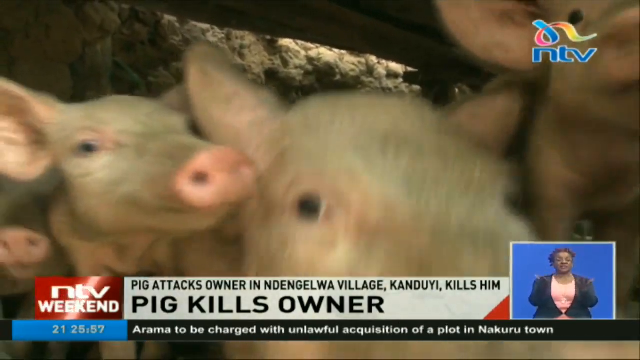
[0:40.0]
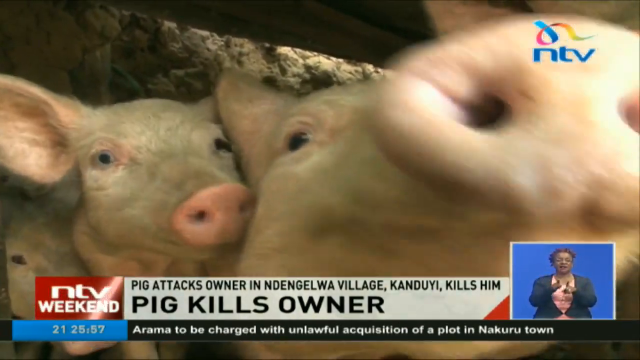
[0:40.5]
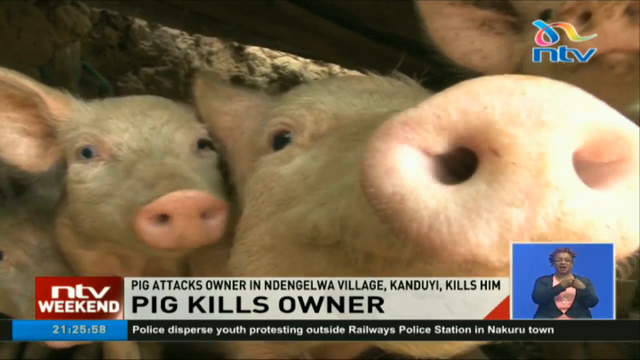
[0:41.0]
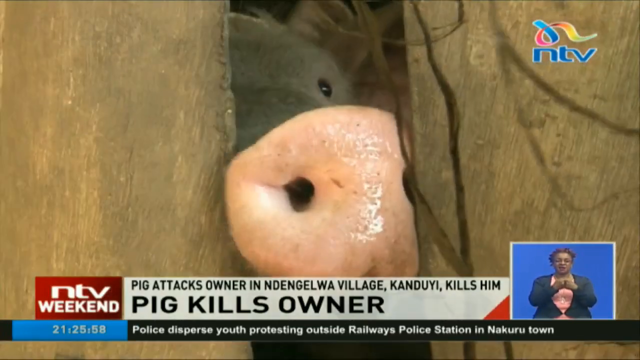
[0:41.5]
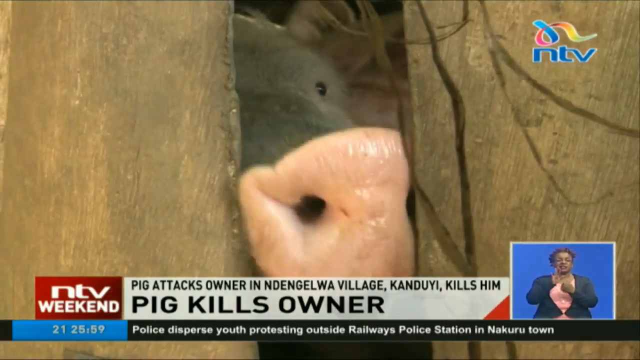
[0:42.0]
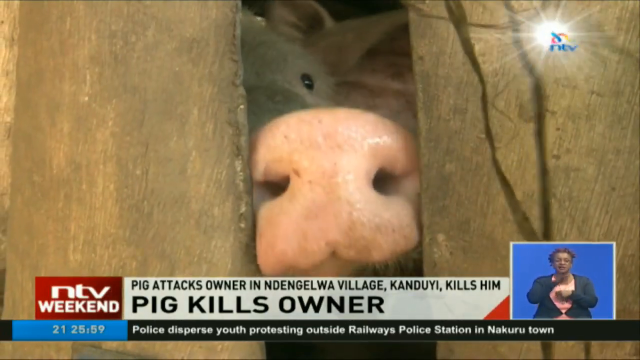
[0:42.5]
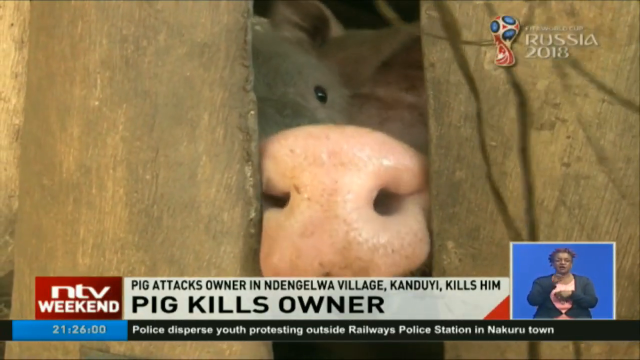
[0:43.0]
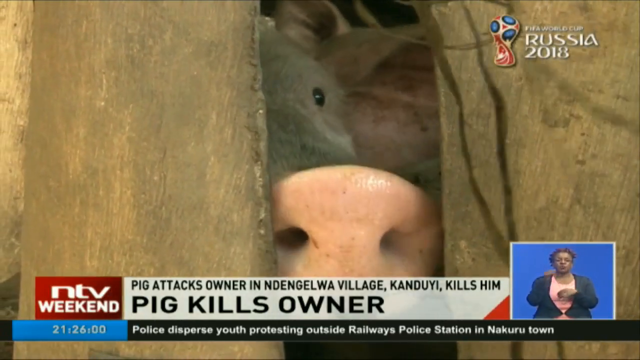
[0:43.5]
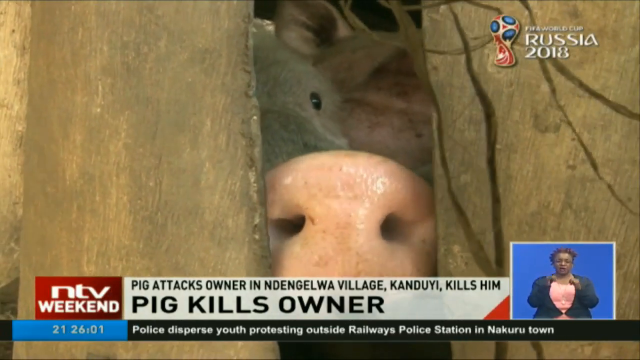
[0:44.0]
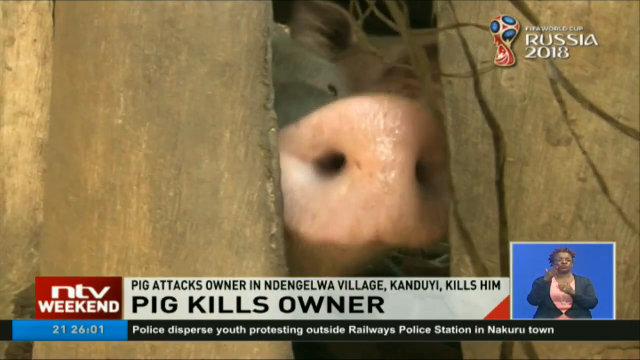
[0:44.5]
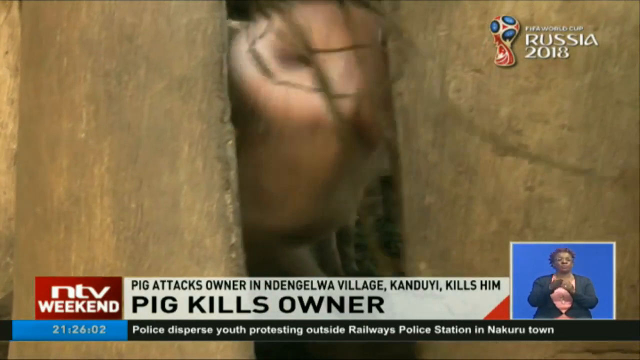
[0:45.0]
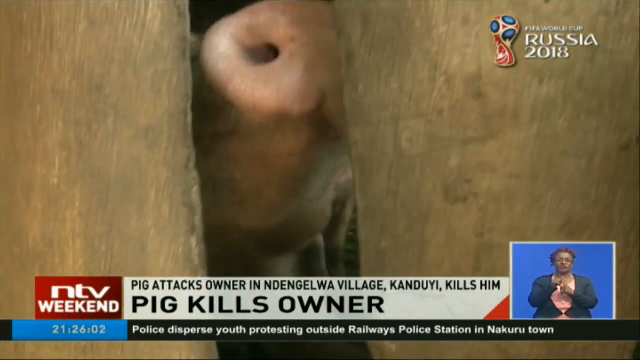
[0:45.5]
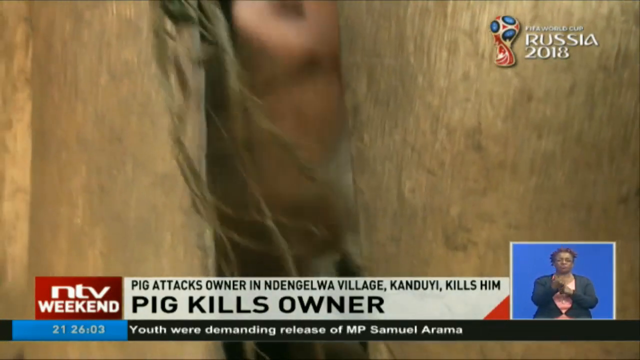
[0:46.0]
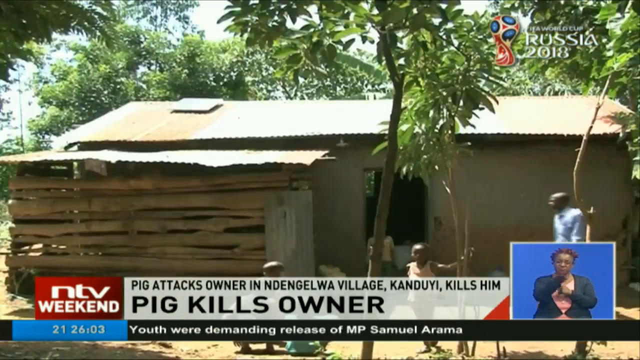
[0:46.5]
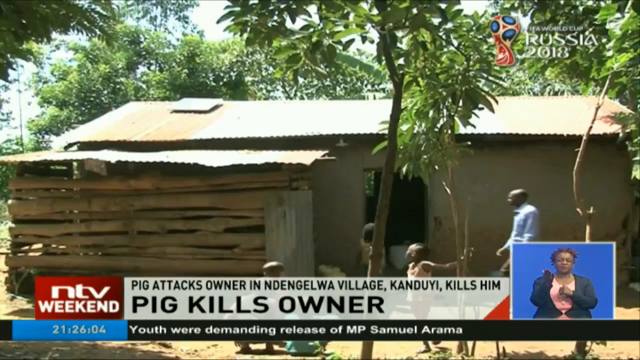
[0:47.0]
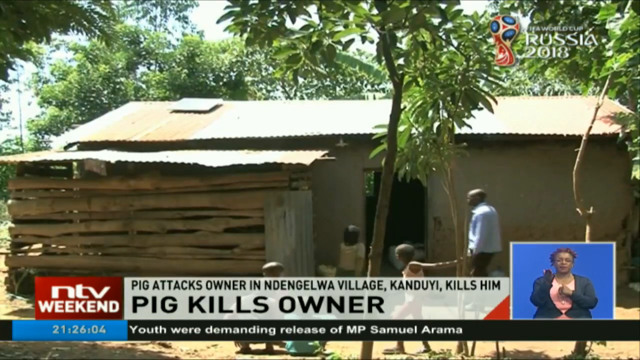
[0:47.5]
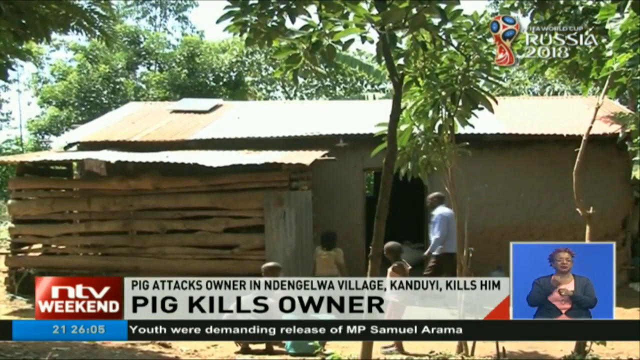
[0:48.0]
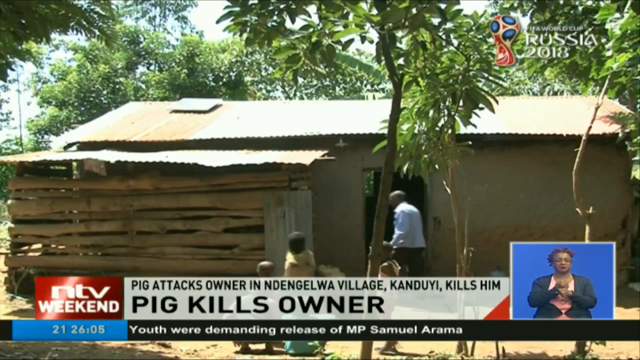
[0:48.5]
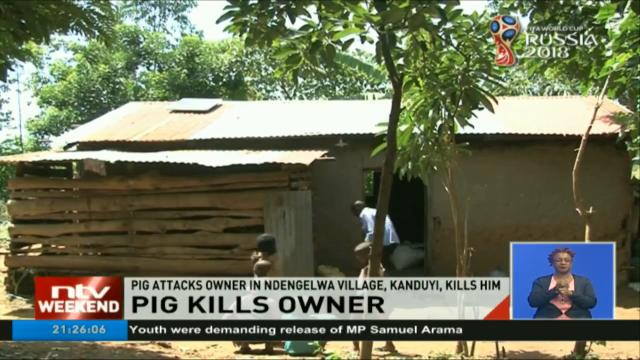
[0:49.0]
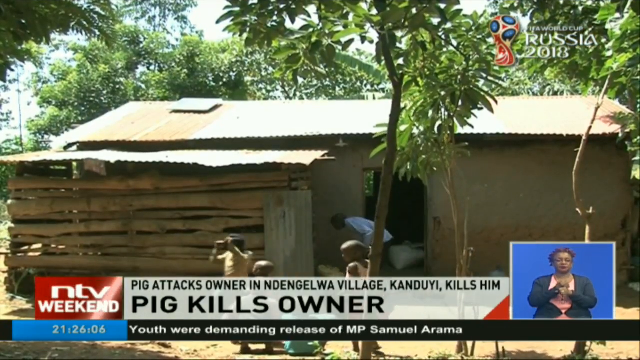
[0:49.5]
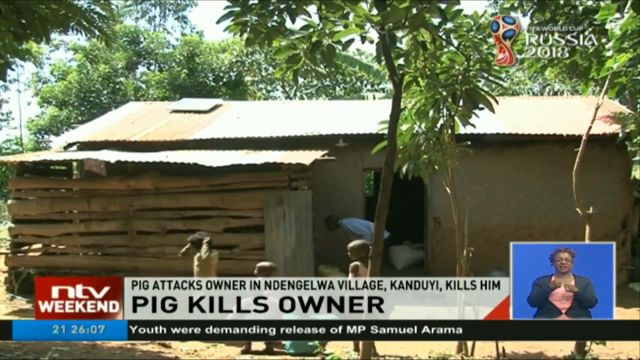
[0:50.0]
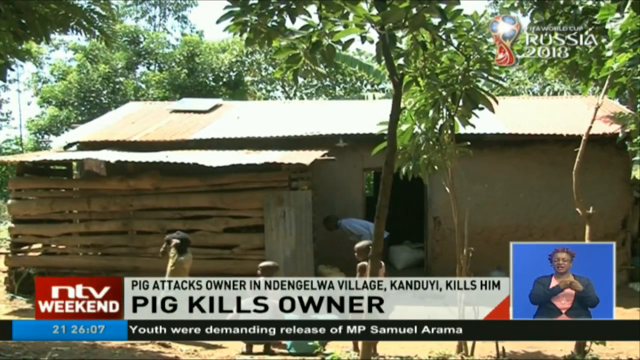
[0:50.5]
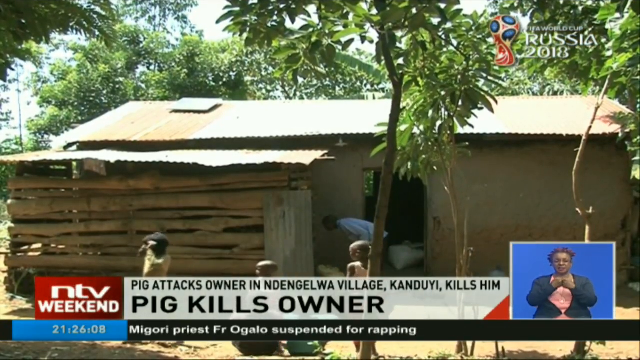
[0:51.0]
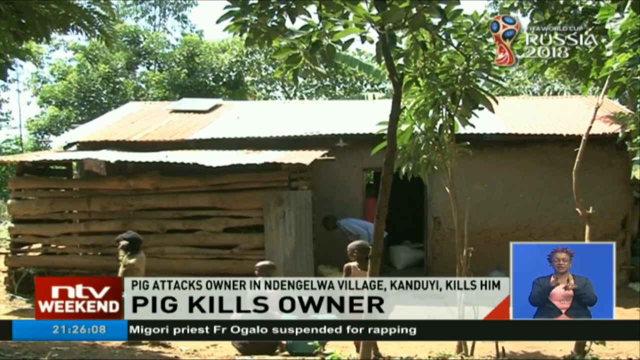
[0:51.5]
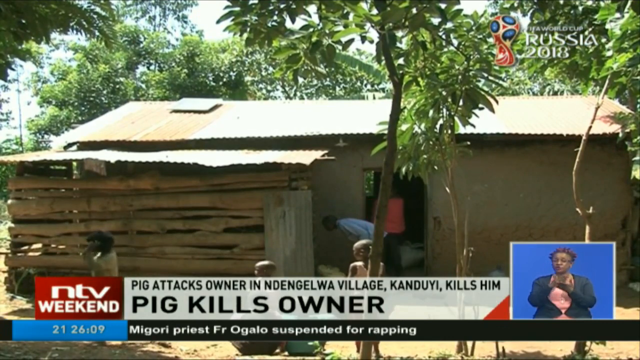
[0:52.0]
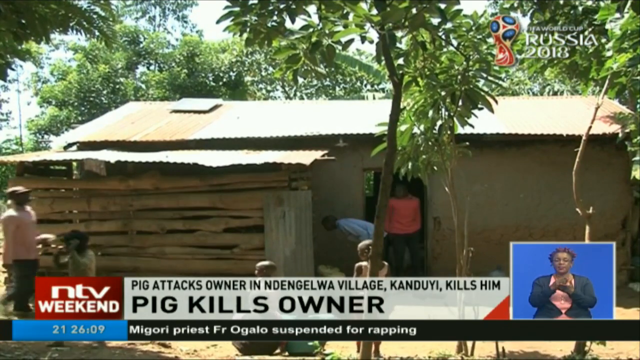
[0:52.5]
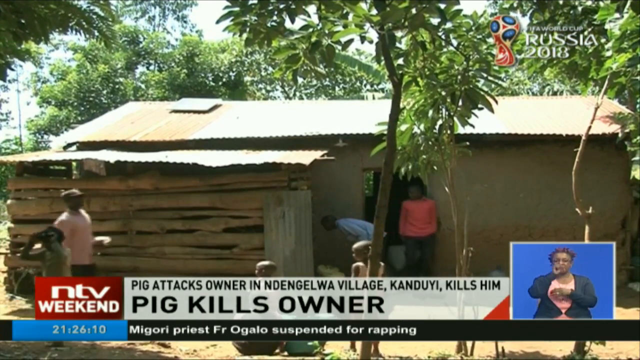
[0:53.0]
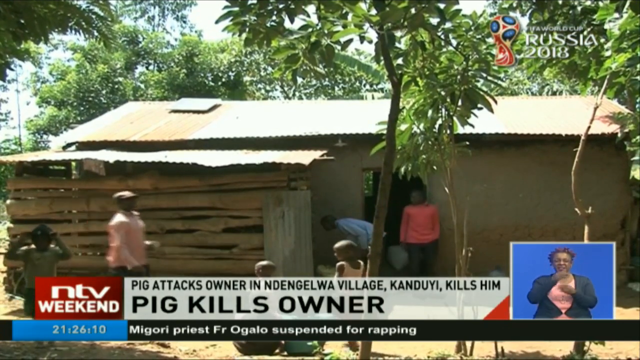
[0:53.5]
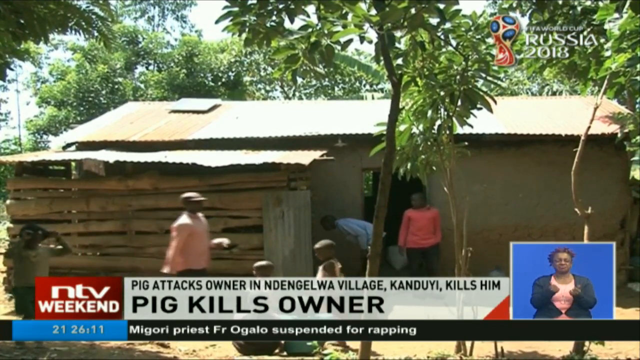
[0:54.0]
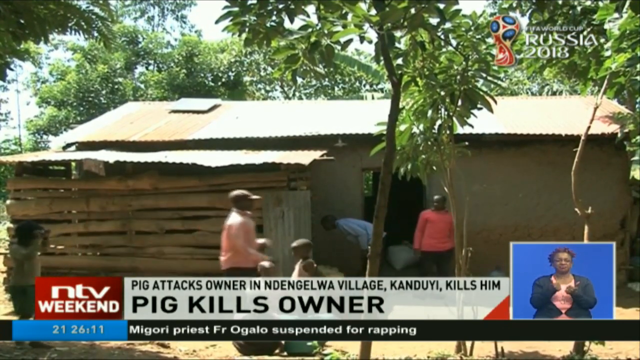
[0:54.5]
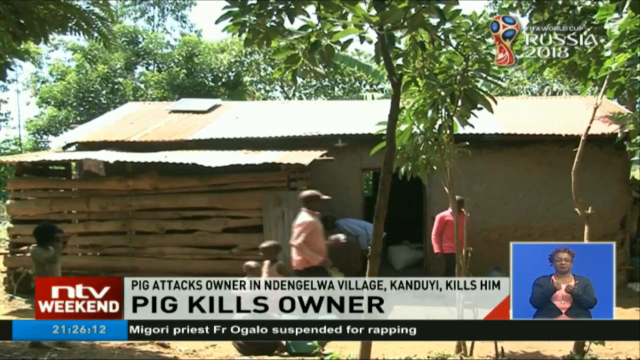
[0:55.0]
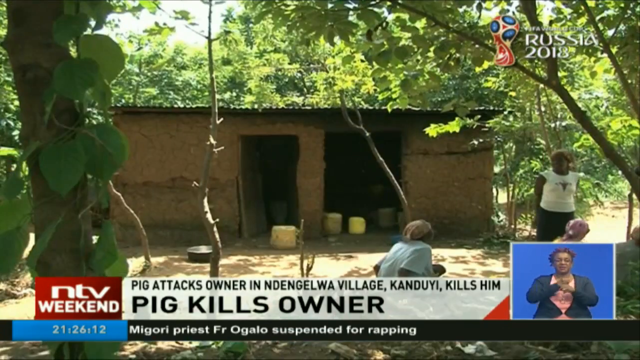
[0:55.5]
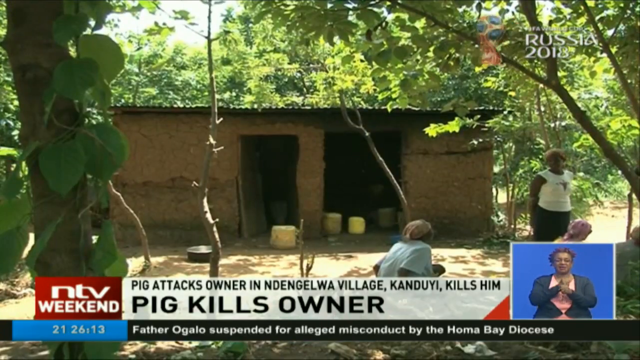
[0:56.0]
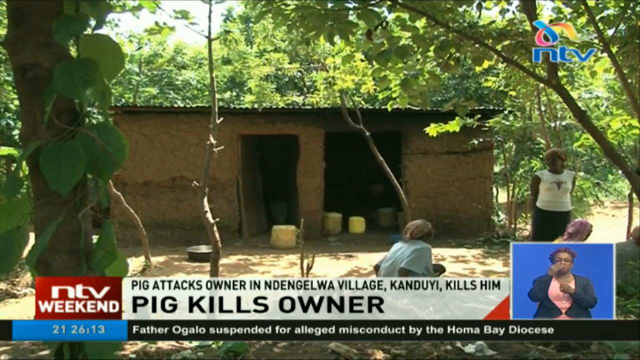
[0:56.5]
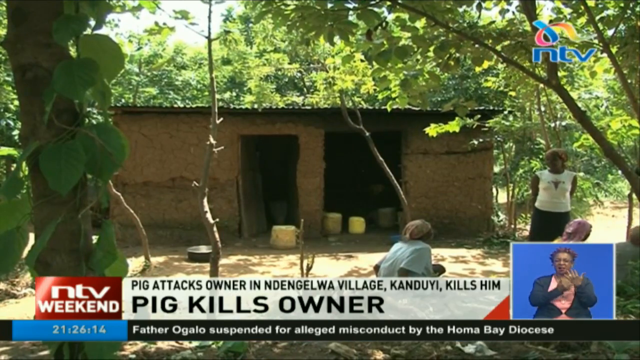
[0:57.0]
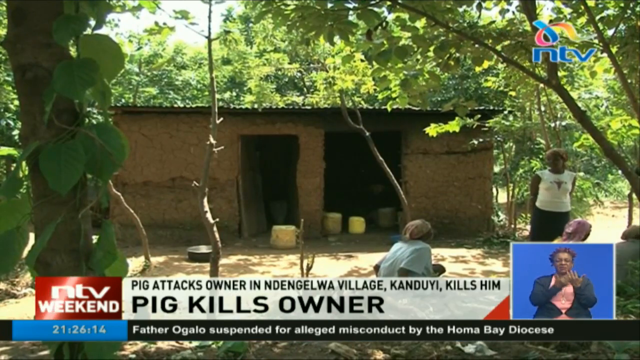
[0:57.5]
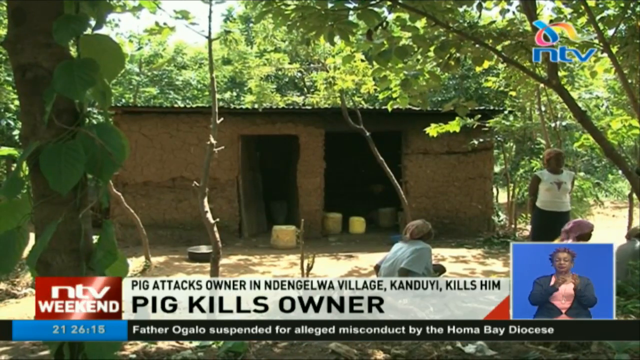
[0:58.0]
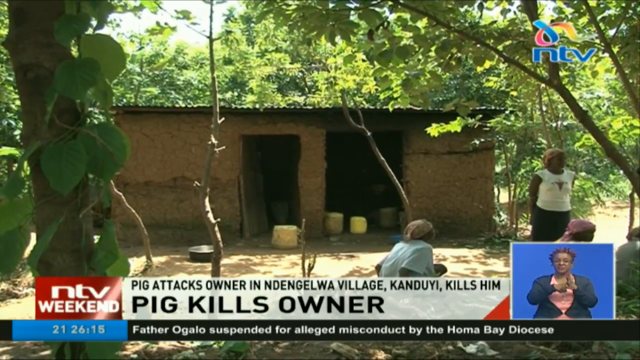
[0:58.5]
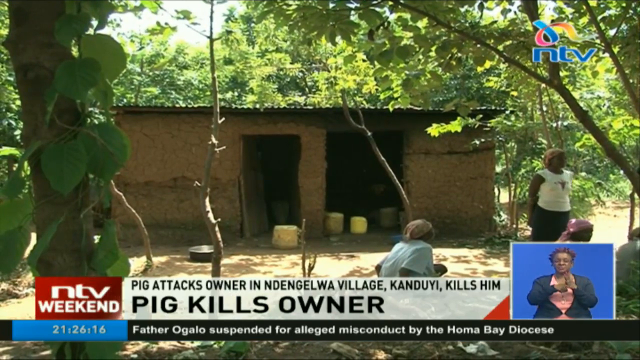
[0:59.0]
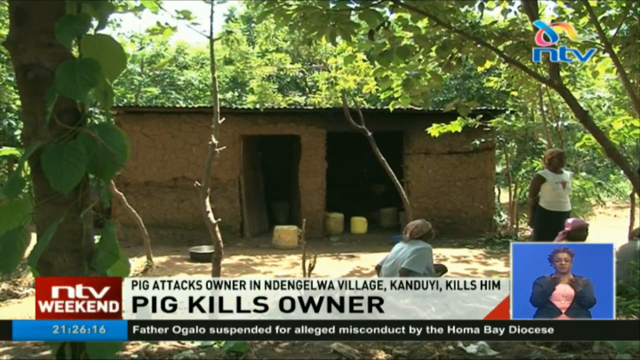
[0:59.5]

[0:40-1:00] A house is shown that seems to be made of soil bricks without cement, suggesting the household is very poor. The pigs are shown more in their pigsties. People, including kids, men and women, are outside the house and next to the shed, moving up and down; they seem to be family members of the man killed by the pigs. There seem to be a lot of trees surrounding the house. The trees are not fruit trees; they look like they could be trees for shade or for protecting the house.